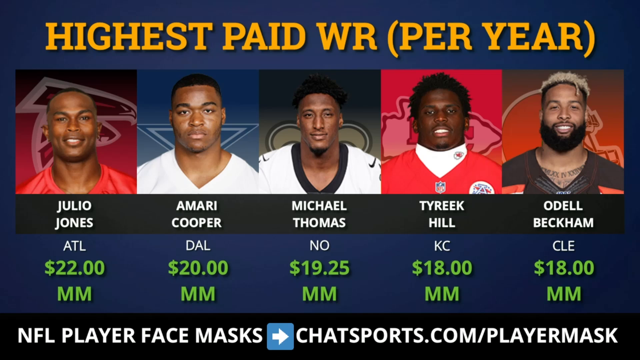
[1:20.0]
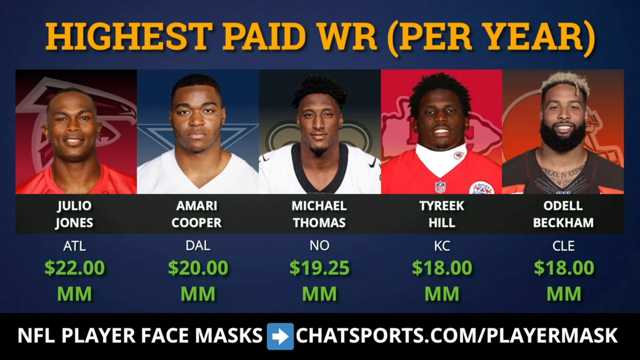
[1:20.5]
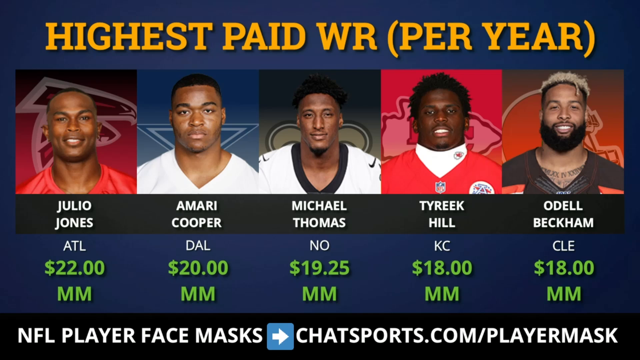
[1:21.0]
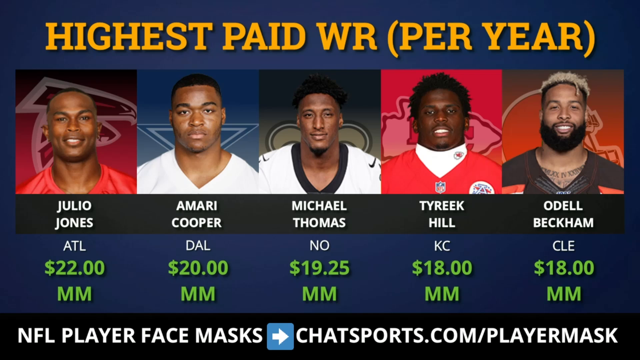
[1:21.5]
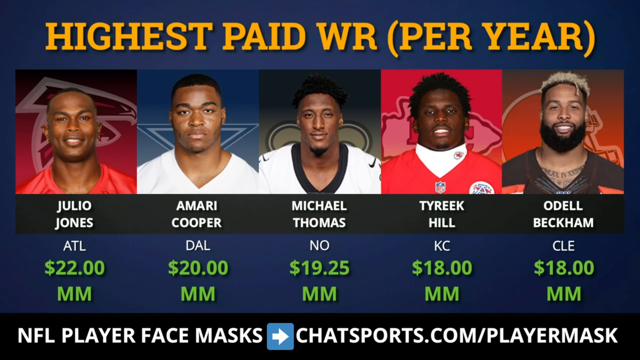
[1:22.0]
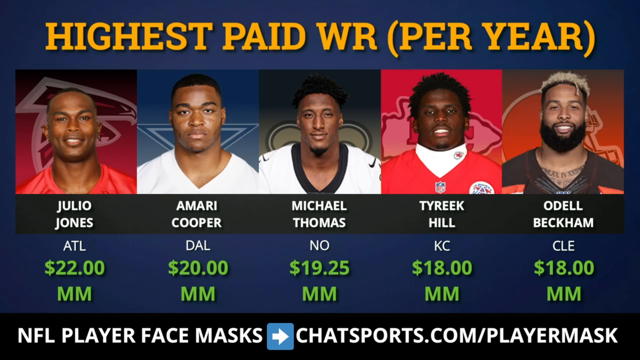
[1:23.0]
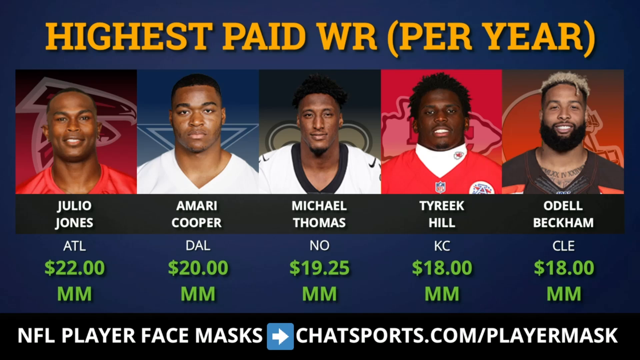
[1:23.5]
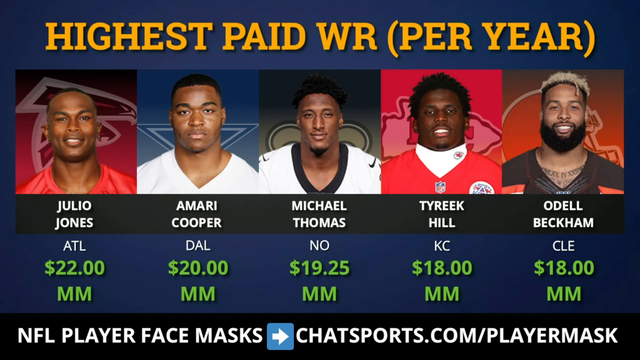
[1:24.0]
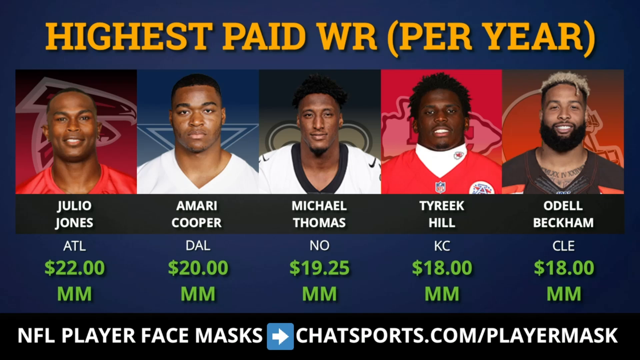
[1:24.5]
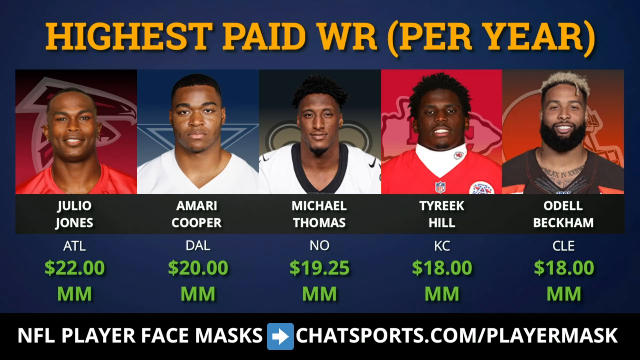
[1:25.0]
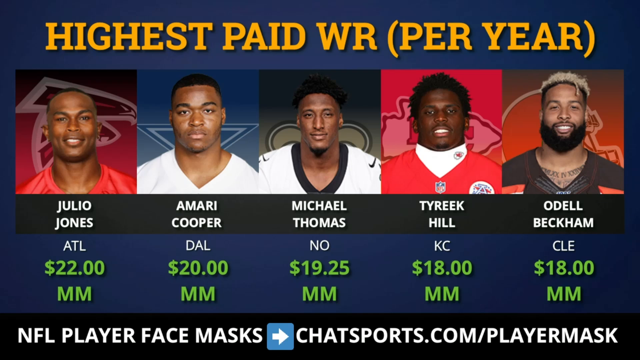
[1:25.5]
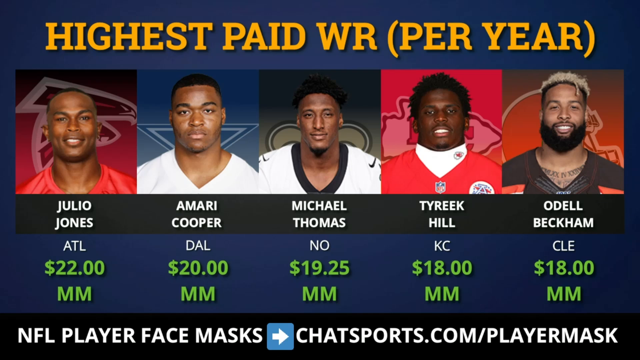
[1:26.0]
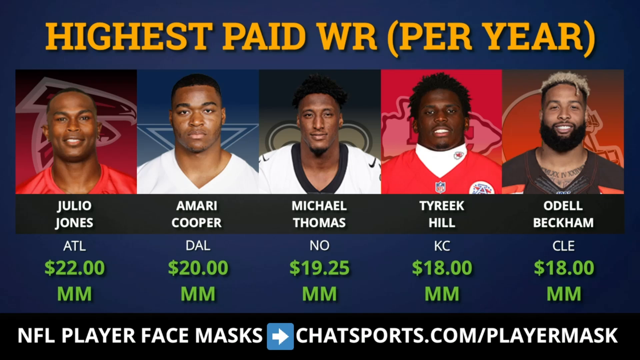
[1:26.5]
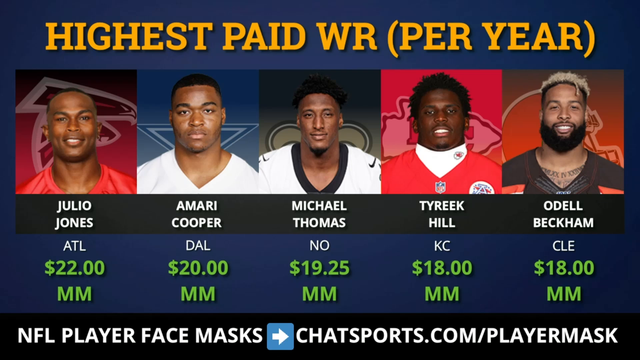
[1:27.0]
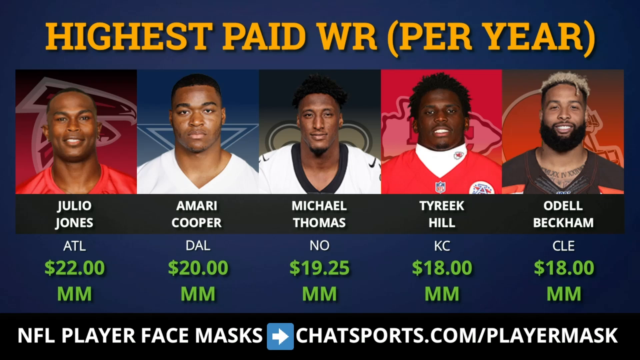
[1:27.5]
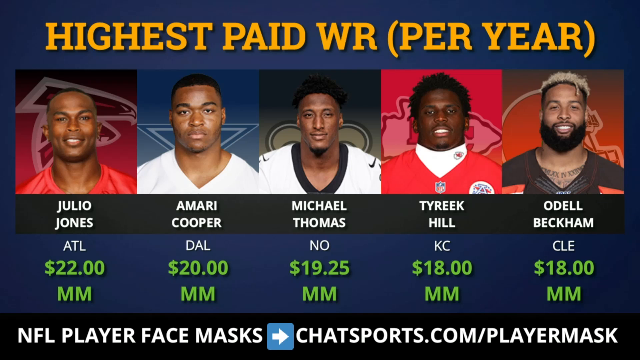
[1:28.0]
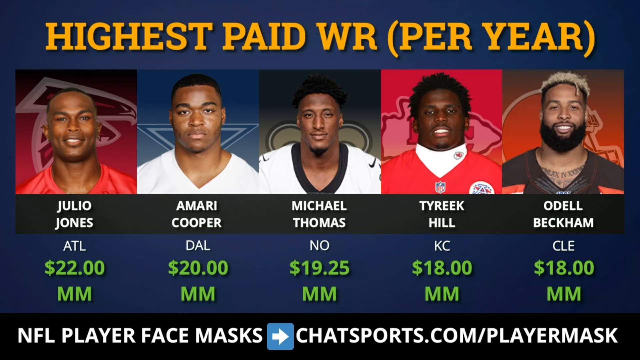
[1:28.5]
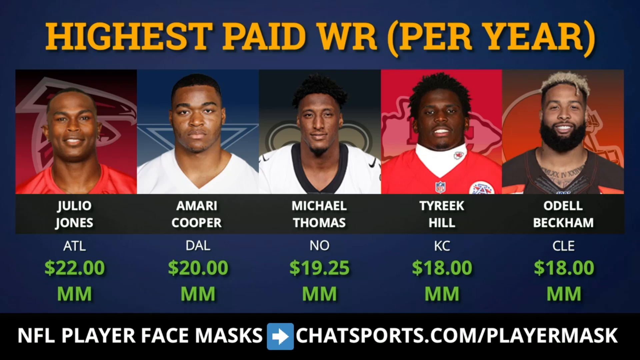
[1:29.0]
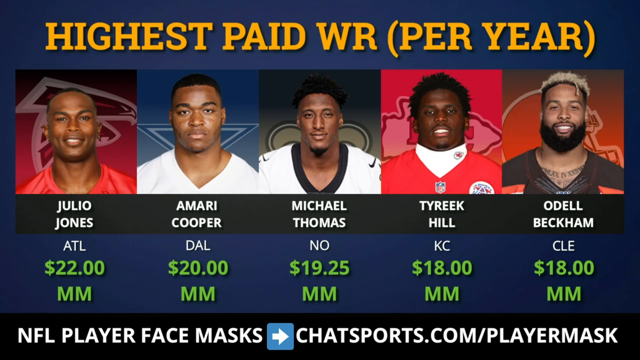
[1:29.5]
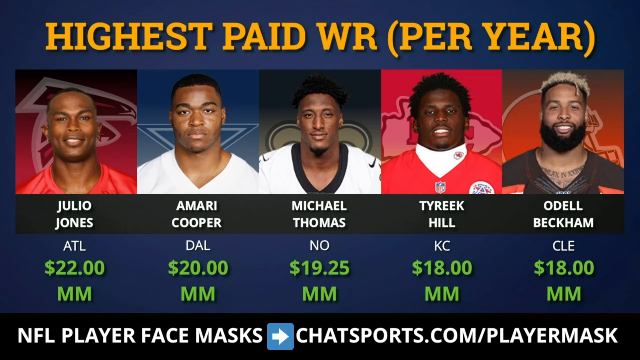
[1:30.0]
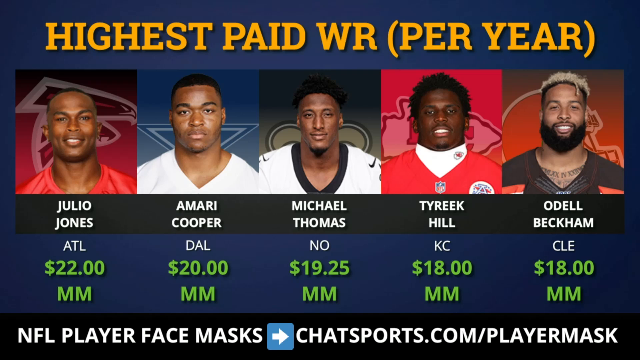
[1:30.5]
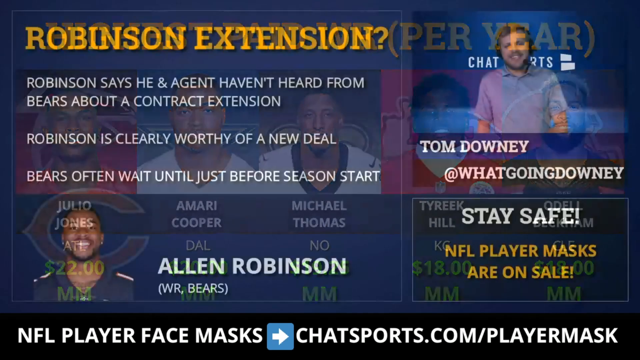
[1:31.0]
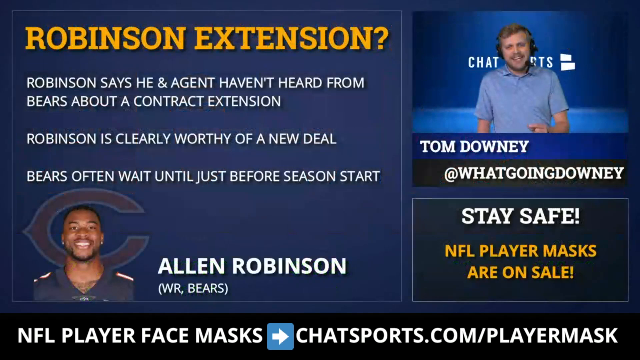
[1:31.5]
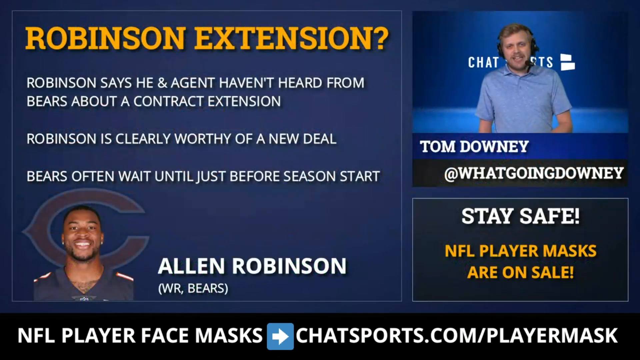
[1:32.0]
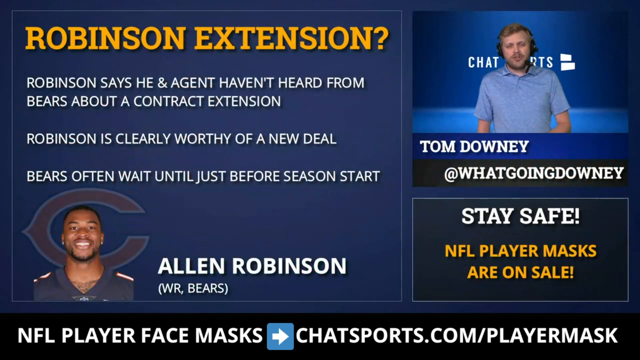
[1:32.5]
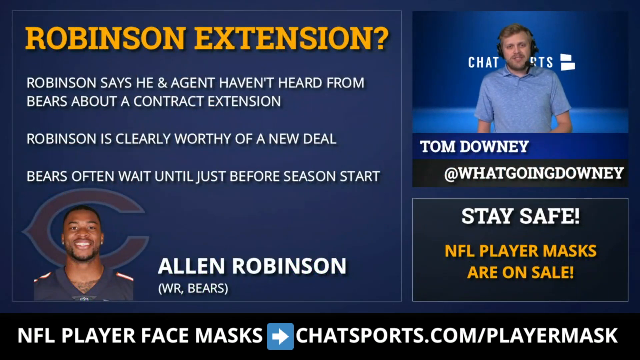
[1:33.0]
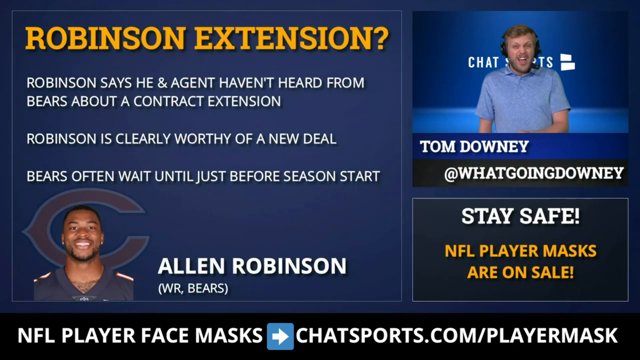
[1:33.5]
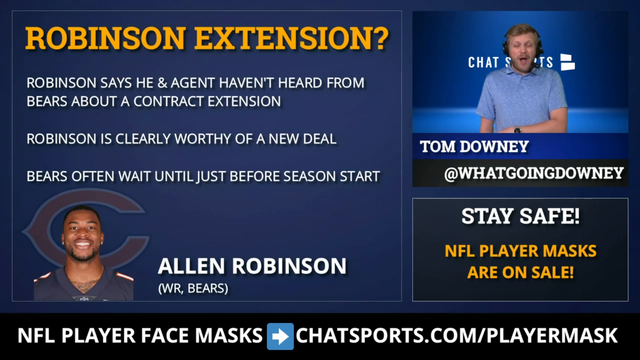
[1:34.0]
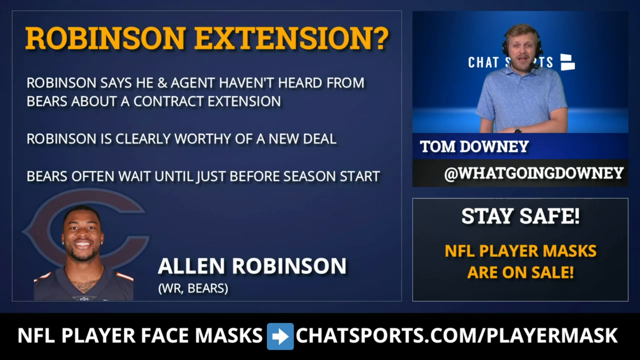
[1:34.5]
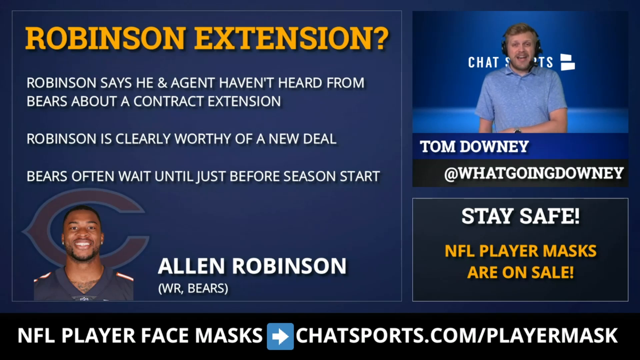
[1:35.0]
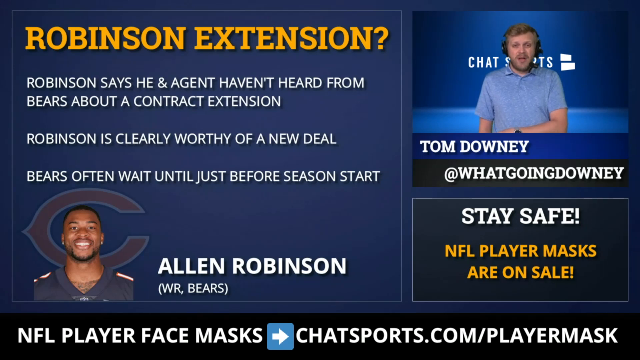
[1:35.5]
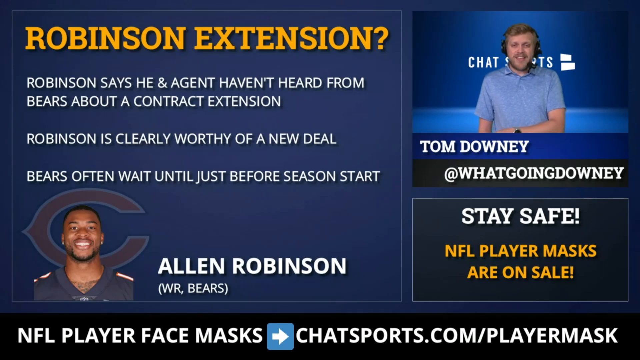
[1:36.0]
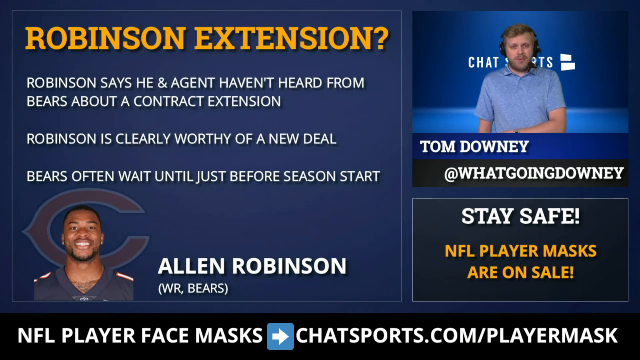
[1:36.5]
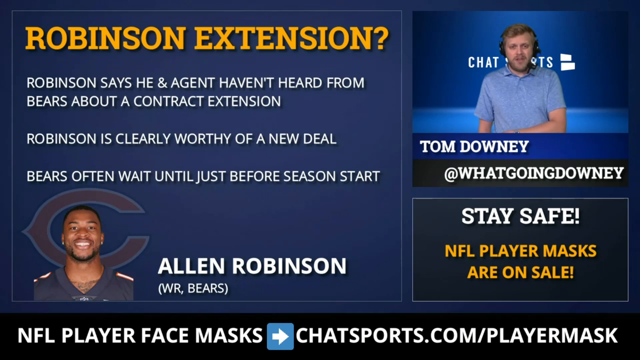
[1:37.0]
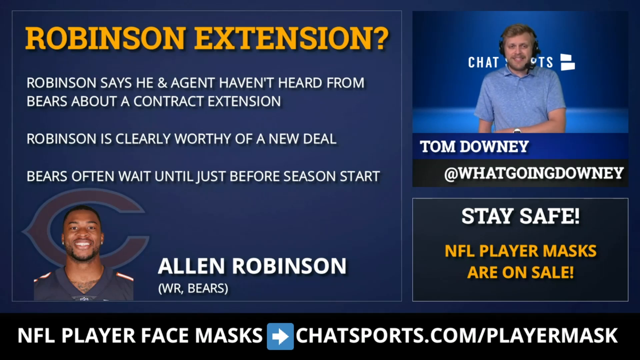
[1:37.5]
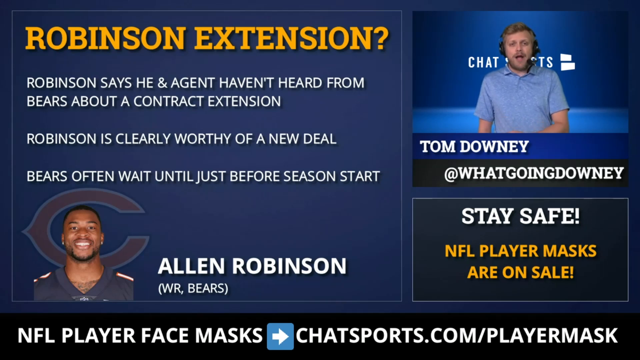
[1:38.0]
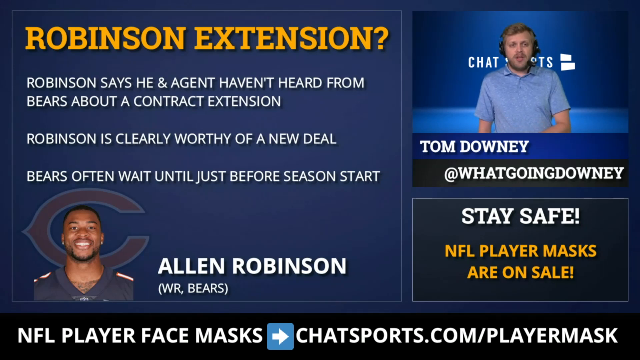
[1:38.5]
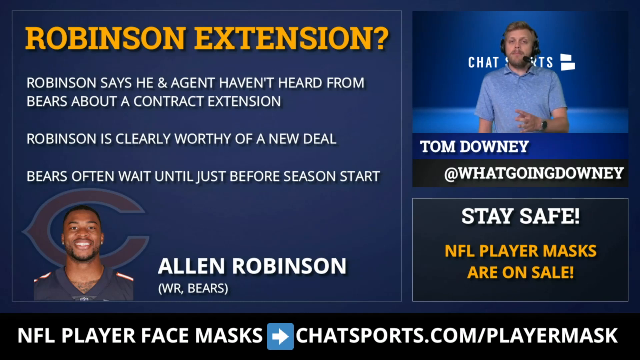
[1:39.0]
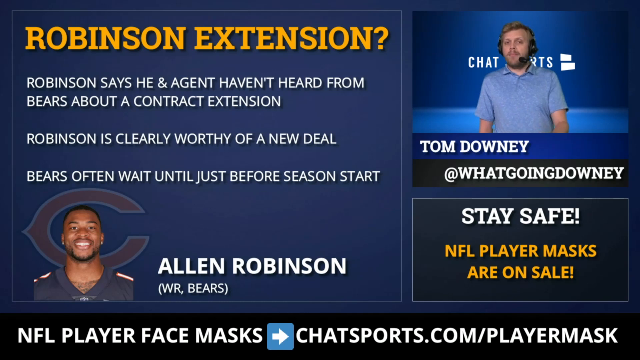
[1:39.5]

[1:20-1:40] A page shows the highest paid WR per year in the NFL, with five players across. Their profile pictures, shown fairly close up, have their names underneath, along with the team each is on and how much they have made, in the millions, from $22 million down to $18 million. All are Black men. Underneath it reads "NFL player face masks" and "Chatsports.com player mask". Next comes a page dedicated to Allen Robinson, reading "Robinson Extension?" with a short write-up about him being worthy of a new deal. A man with a sports chat show appears in the upper right corner, wearing a headset with a microphone coming around the left side of his face. A box underneath him reads "stay safe" and "NFL player masks are on sale".